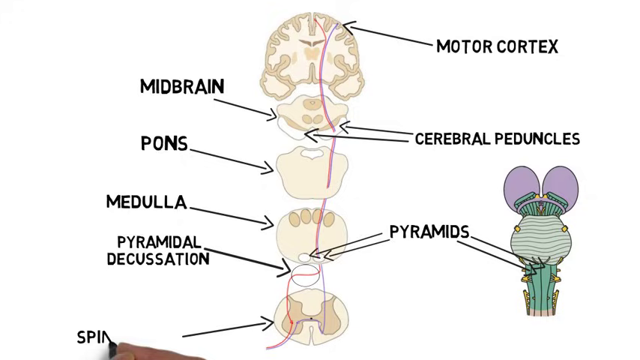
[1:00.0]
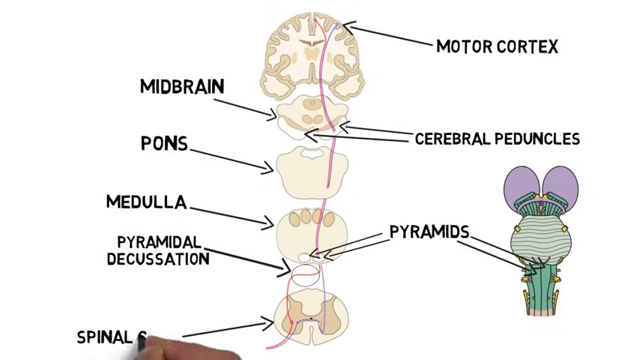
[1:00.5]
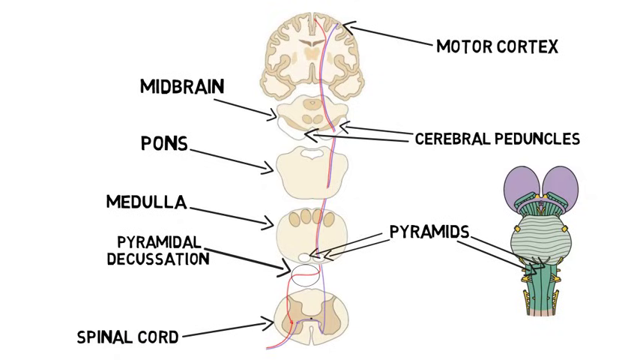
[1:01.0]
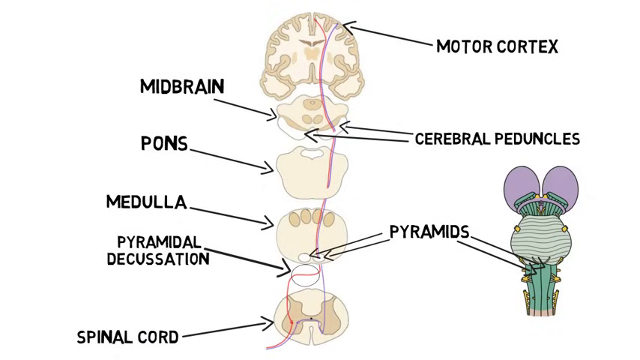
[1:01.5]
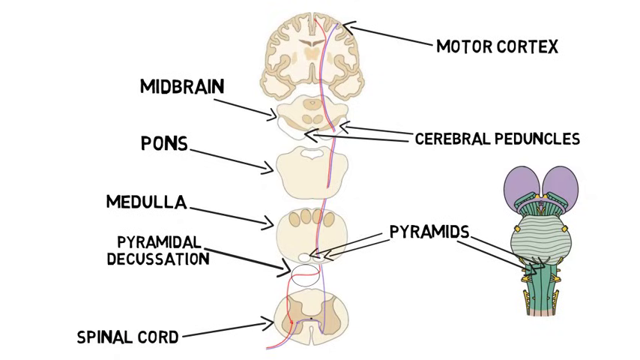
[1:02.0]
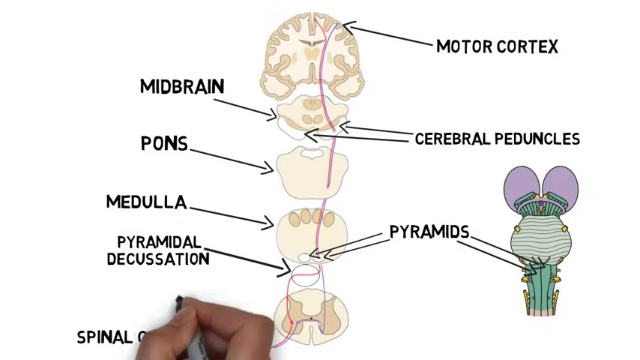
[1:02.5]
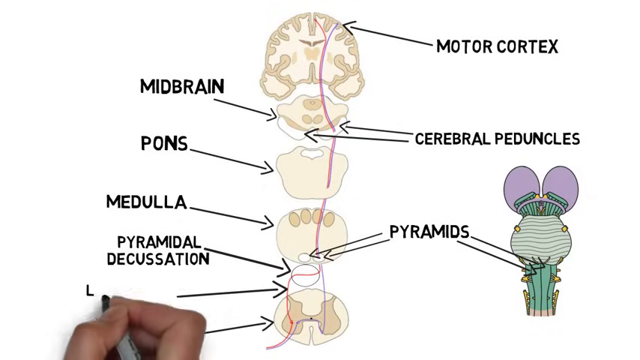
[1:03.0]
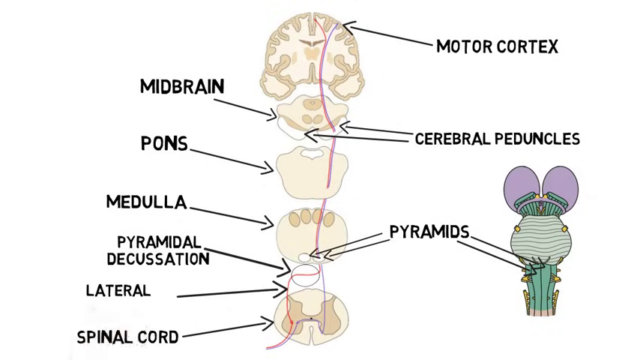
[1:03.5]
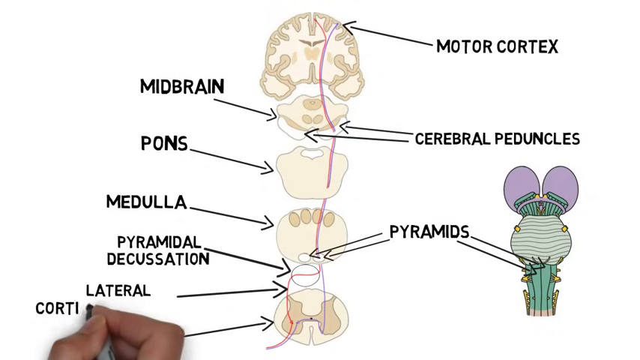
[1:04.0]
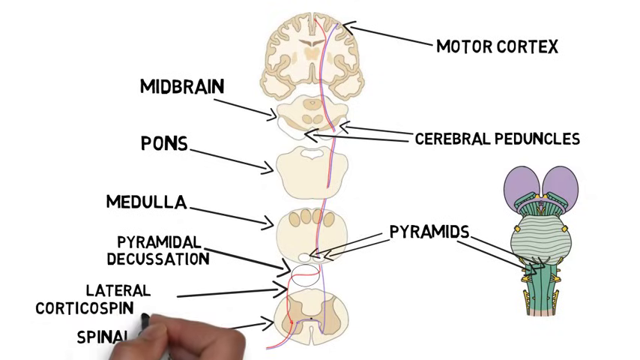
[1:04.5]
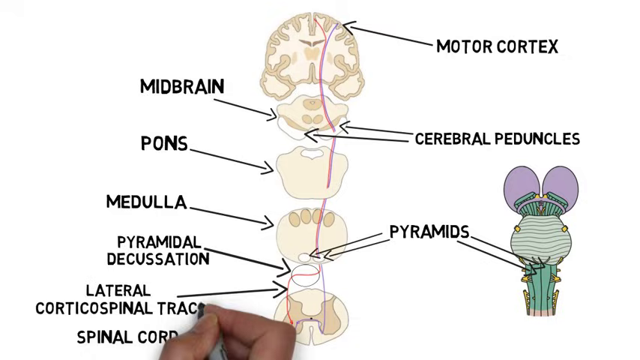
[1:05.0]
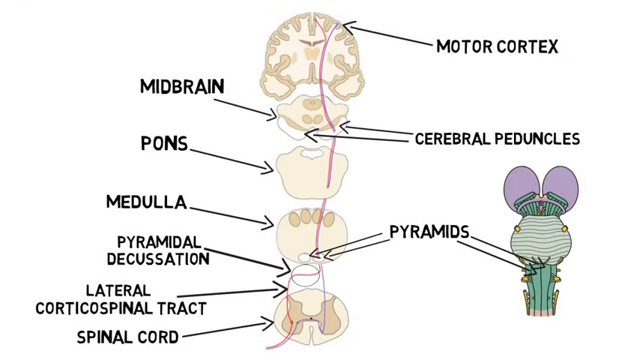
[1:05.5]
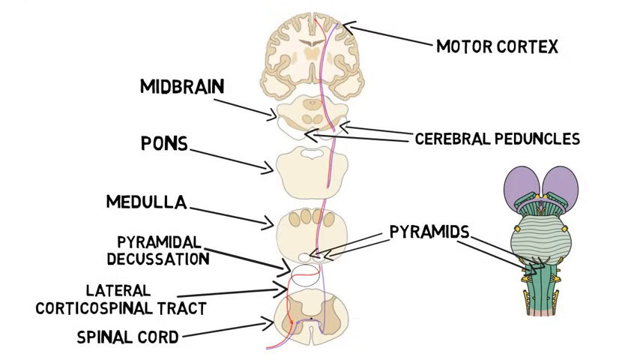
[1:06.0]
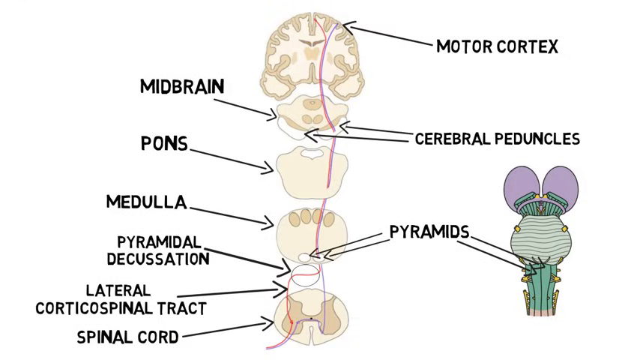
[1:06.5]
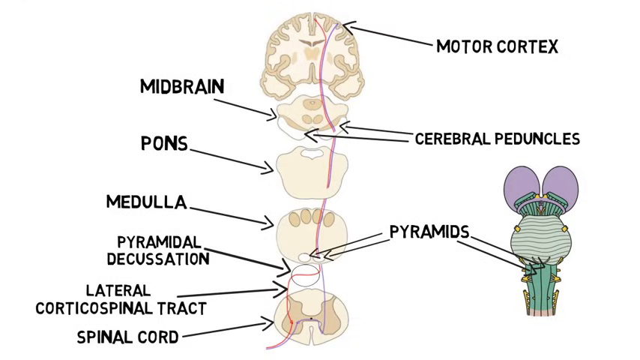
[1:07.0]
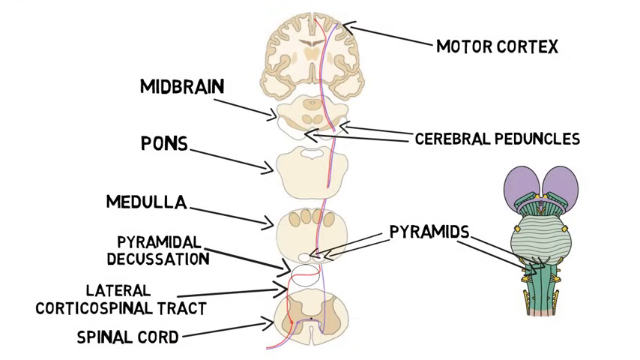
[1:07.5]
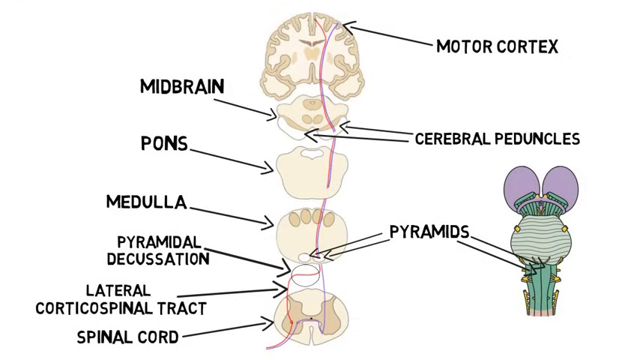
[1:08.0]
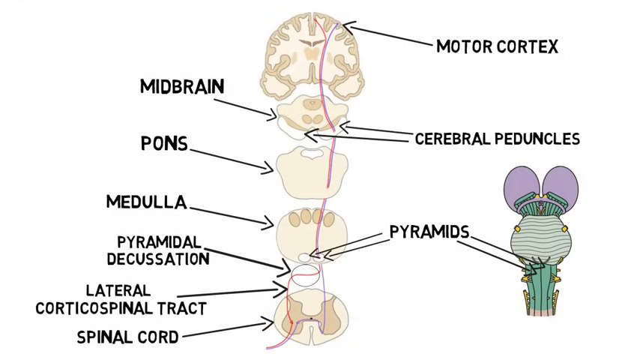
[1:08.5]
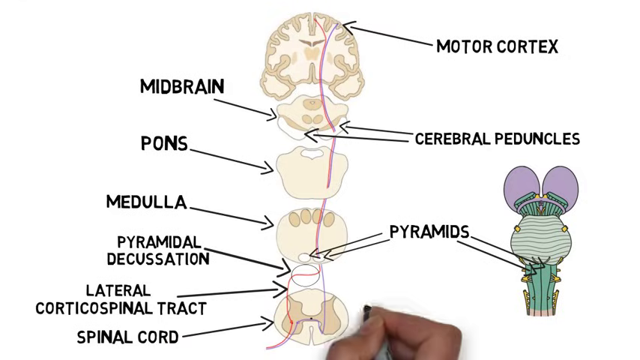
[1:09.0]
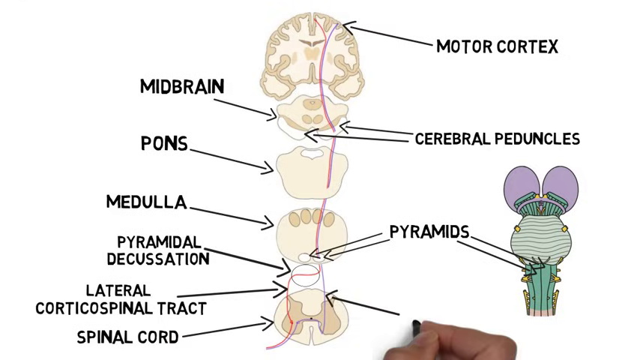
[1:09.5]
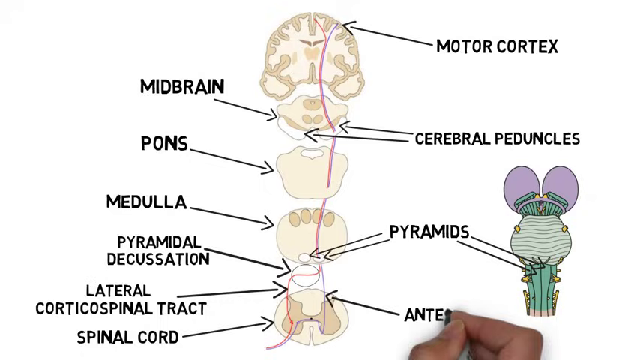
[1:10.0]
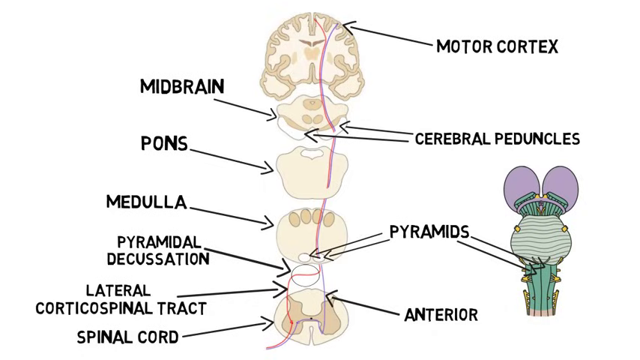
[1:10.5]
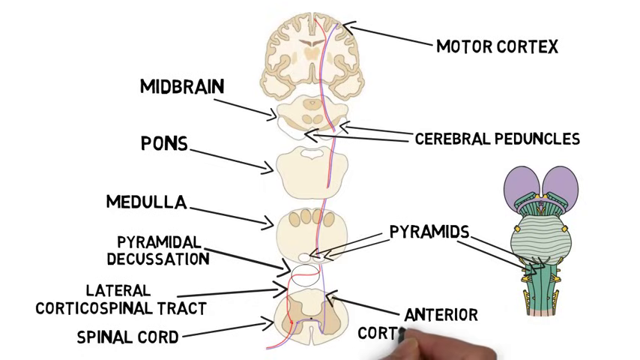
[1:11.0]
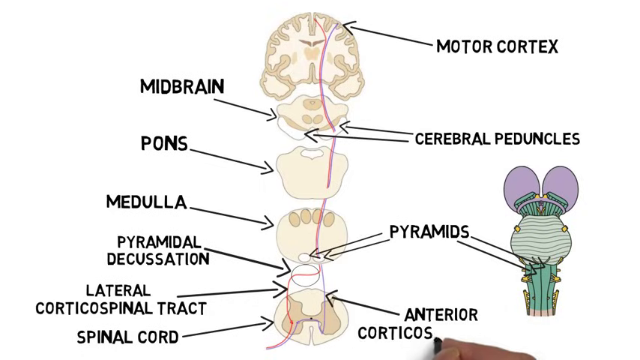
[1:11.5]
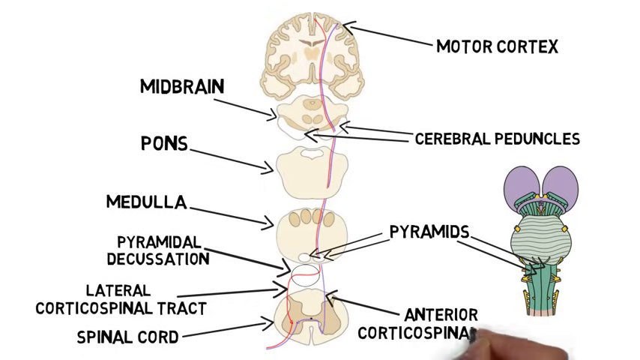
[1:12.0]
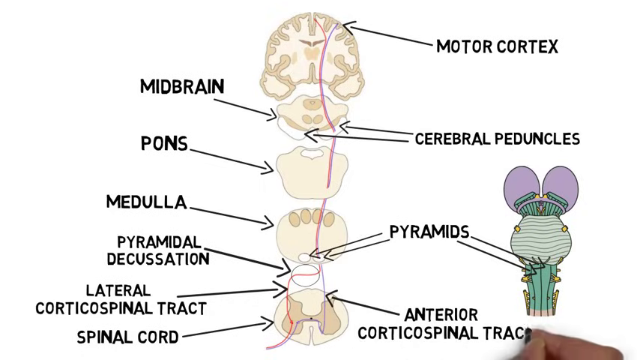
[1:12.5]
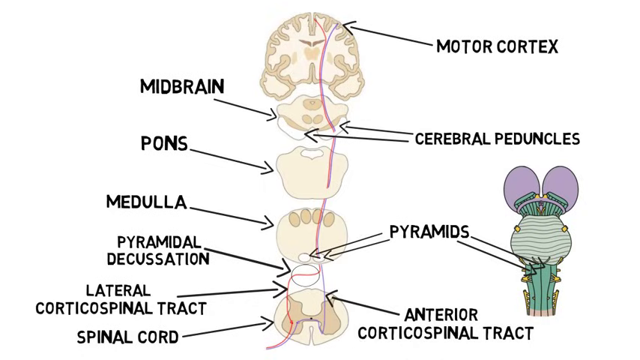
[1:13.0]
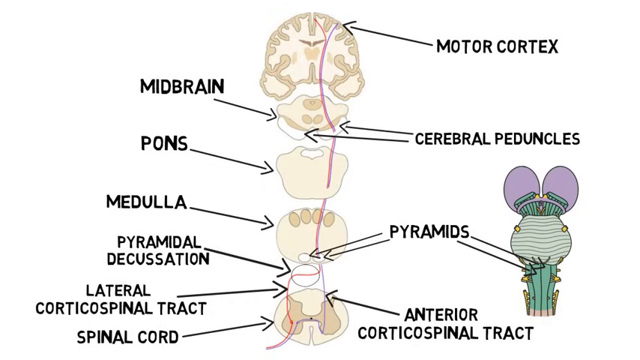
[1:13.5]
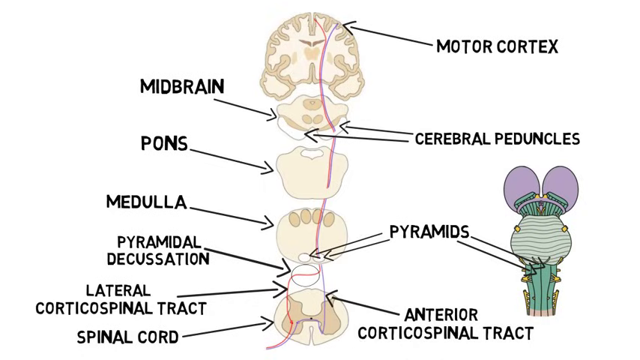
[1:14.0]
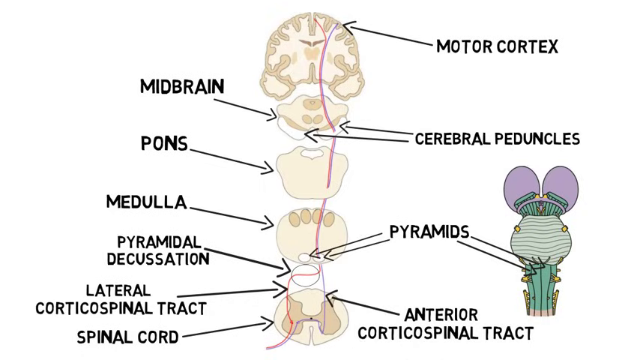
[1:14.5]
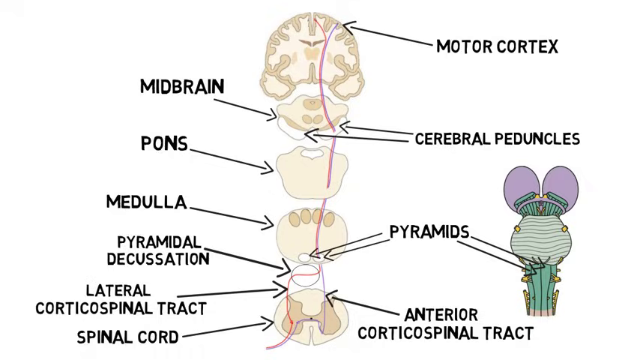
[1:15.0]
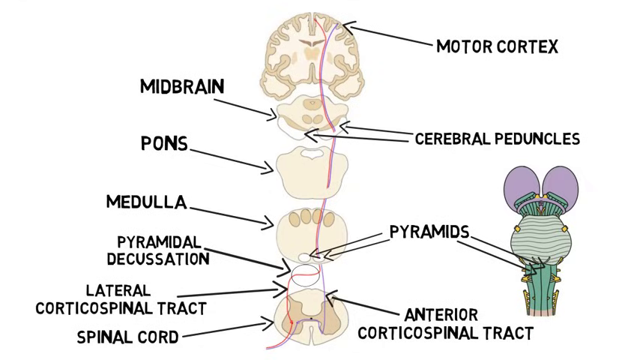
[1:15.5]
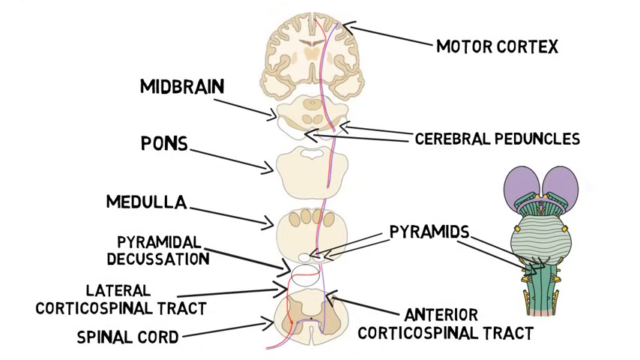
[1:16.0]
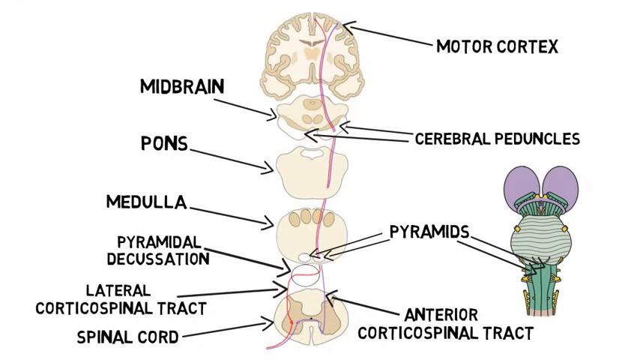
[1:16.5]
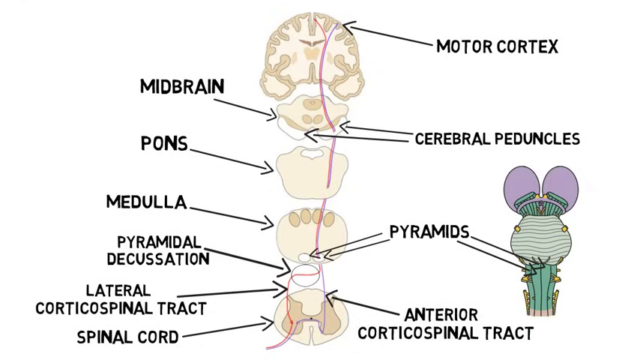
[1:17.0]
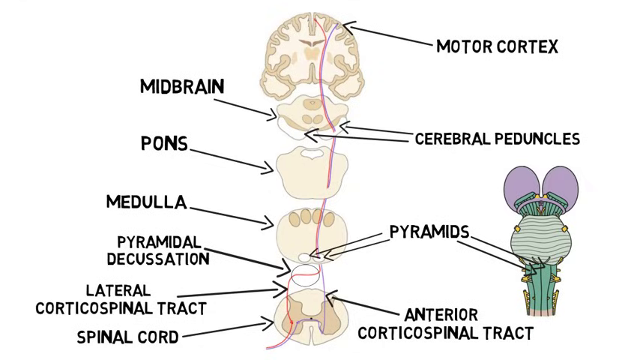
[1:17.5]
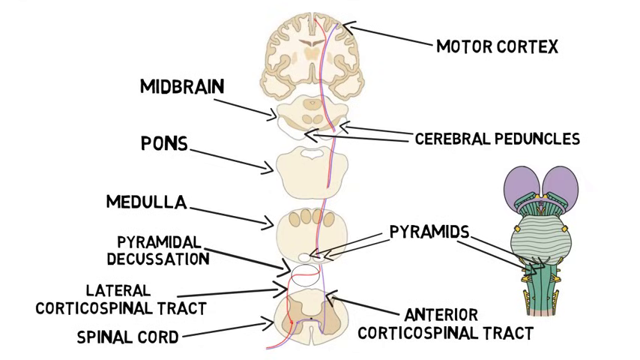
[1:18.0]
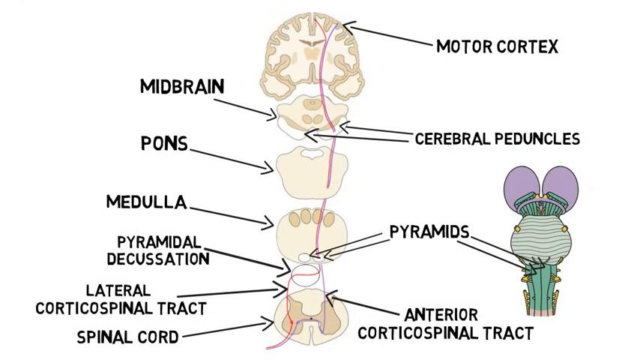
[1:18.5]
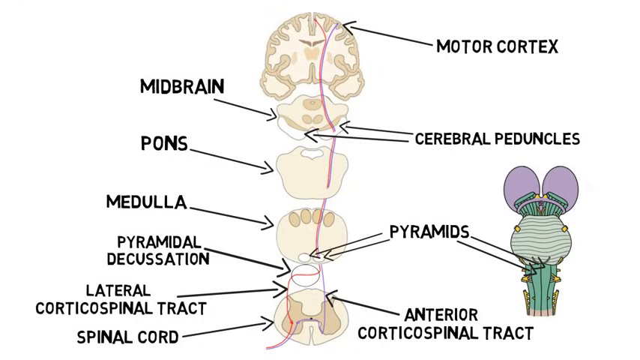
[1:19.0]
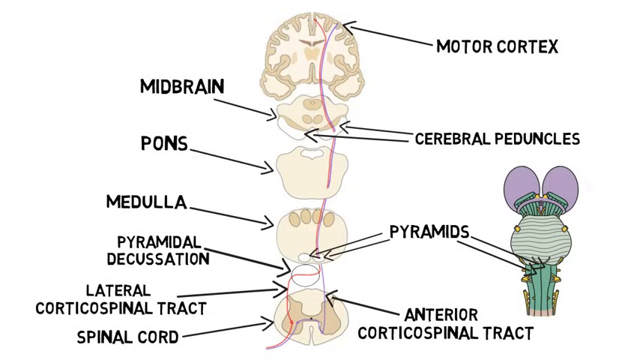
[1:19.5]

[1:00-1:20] The hand finishes writing "spinal cord" at the arrow on the bottom of the screen. It then draws another arrow right above that on the left side and writes "lateral corticospinal tract". The hand comes up from the bottom again, this time on the right side of the diagram, and draws an arrow pointing at the area it labels "anterior corticospinal tract". The diagram remains with all its labels and arrows pointing at their respective areas, the labels listed above each other on the left and right of the diagram. The smaller diagram added earlier stays in the bottom right of the screen.